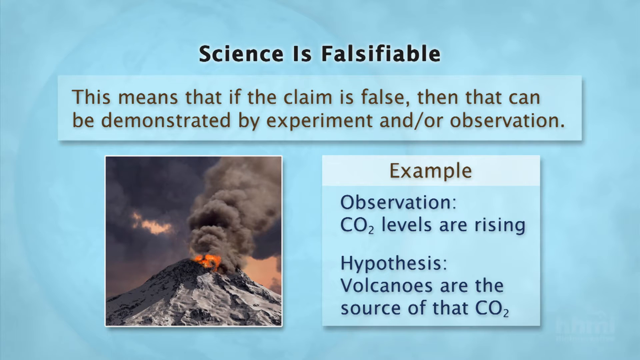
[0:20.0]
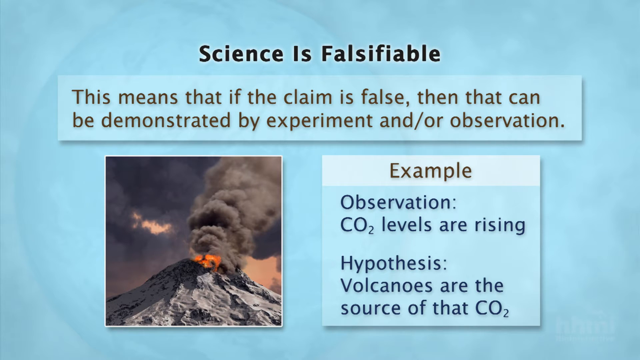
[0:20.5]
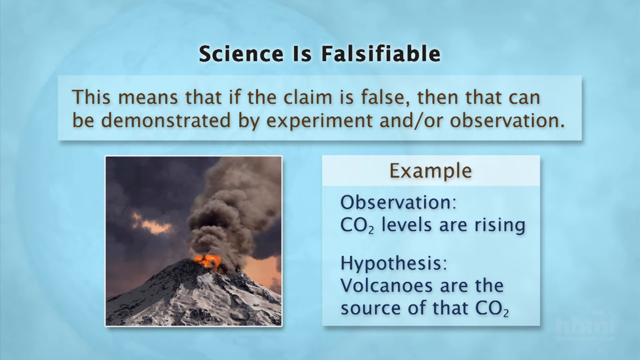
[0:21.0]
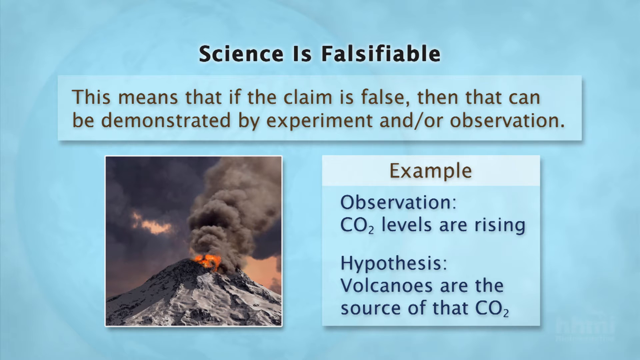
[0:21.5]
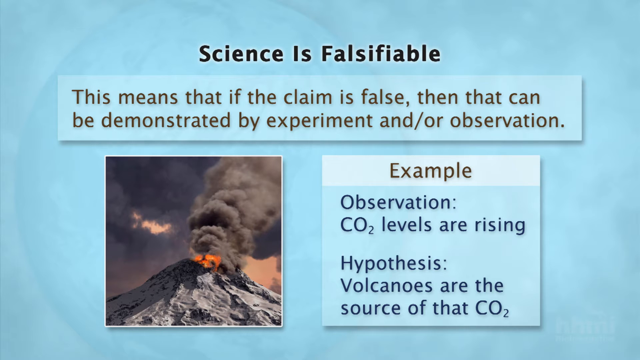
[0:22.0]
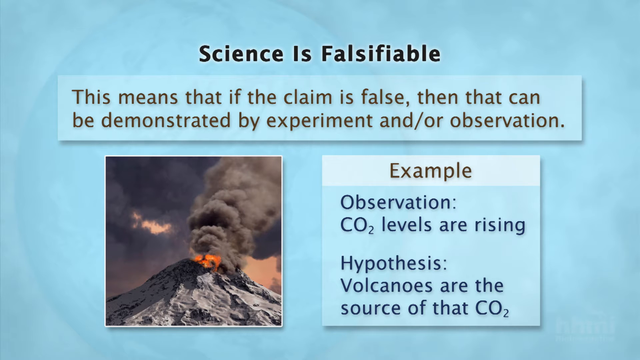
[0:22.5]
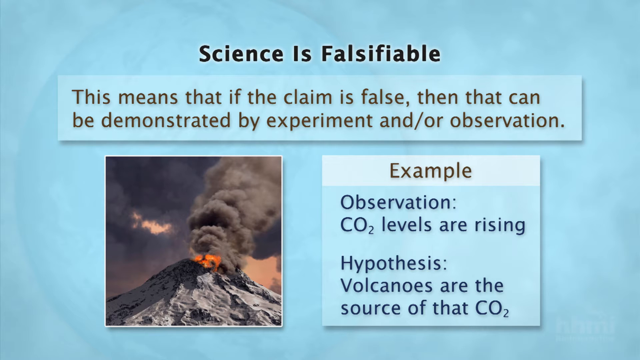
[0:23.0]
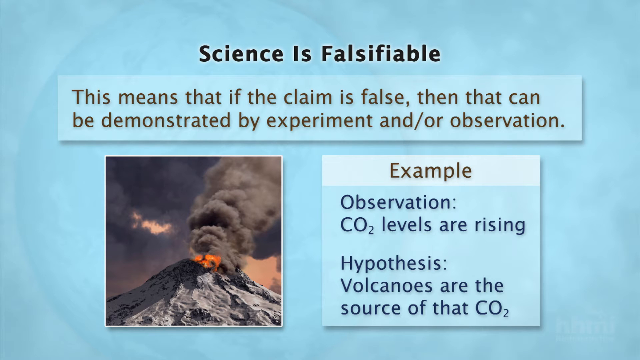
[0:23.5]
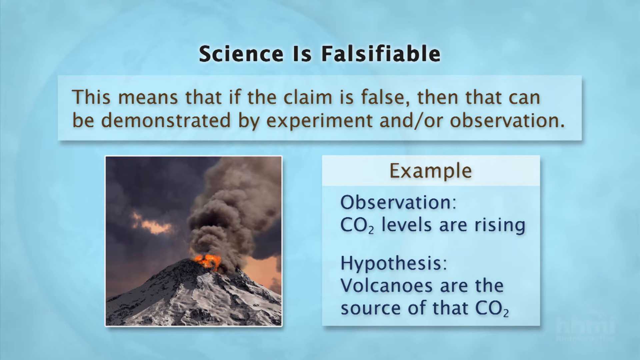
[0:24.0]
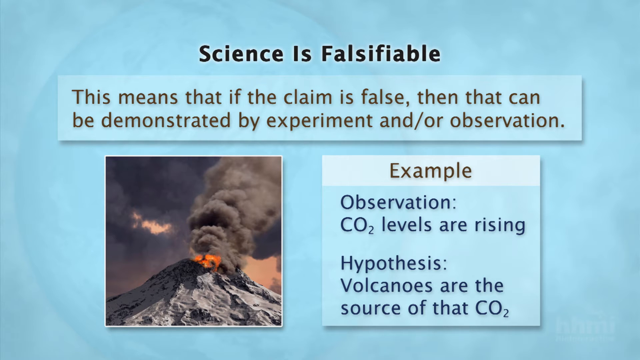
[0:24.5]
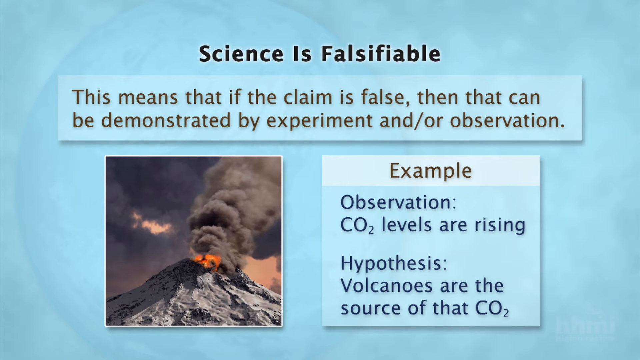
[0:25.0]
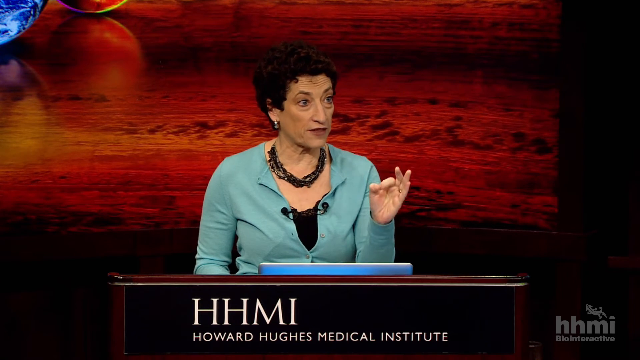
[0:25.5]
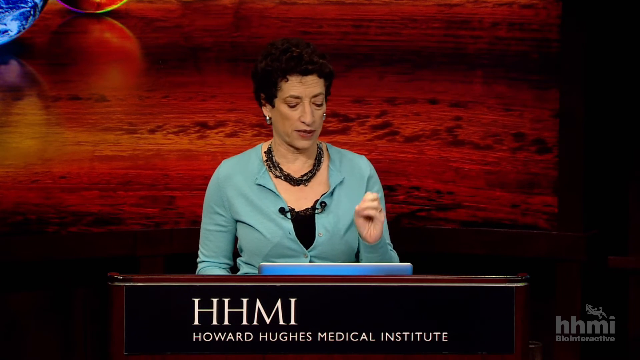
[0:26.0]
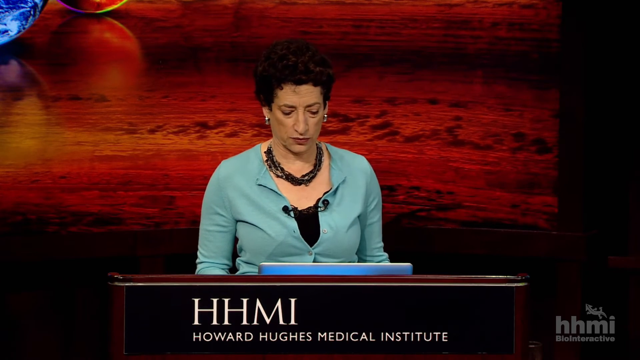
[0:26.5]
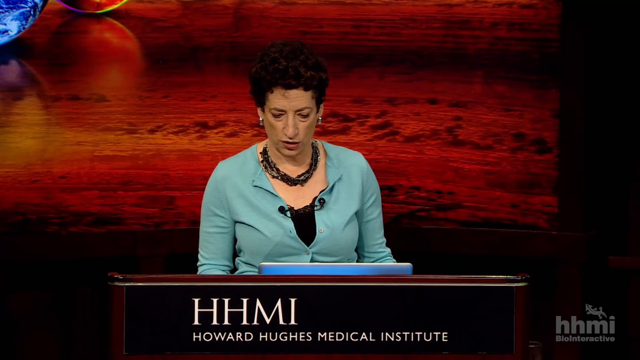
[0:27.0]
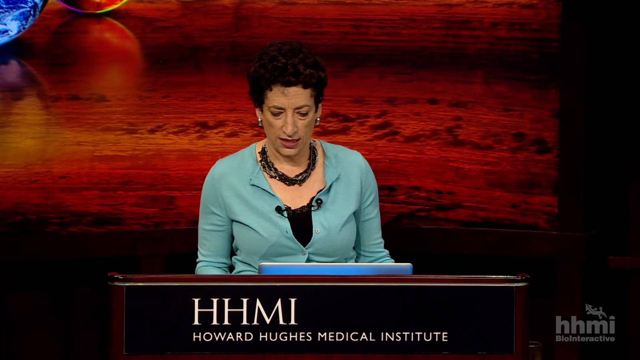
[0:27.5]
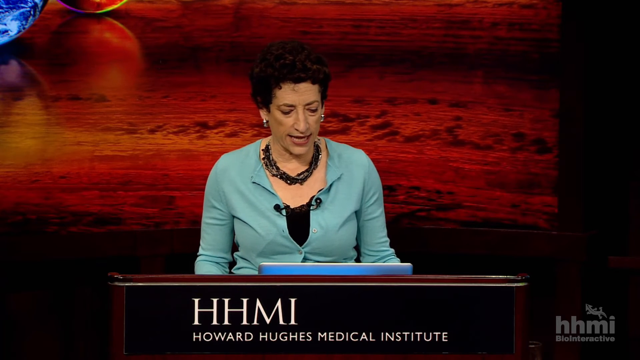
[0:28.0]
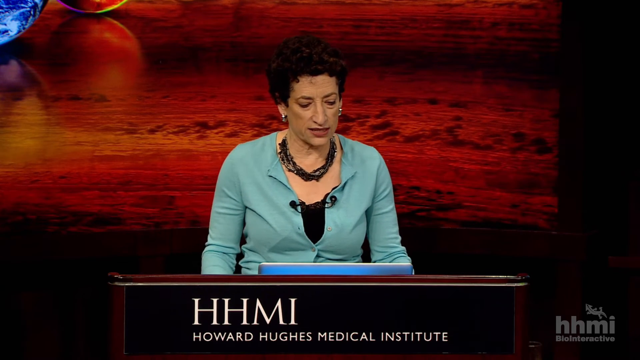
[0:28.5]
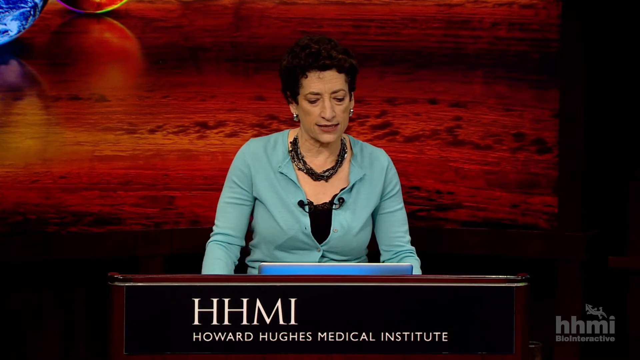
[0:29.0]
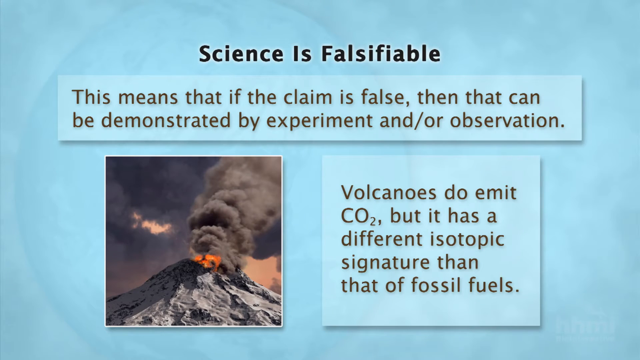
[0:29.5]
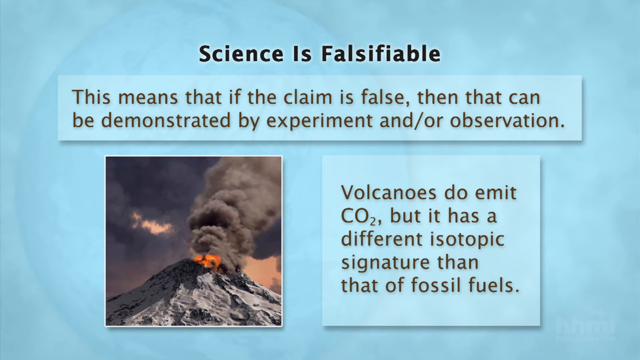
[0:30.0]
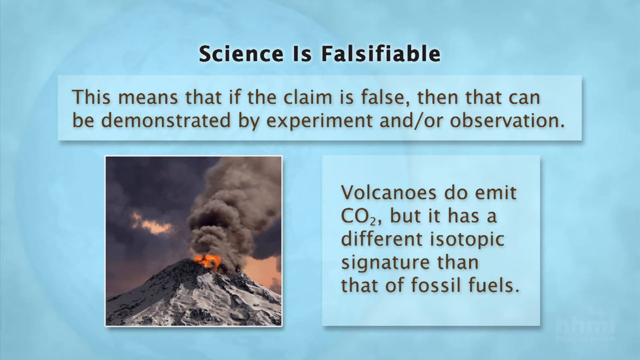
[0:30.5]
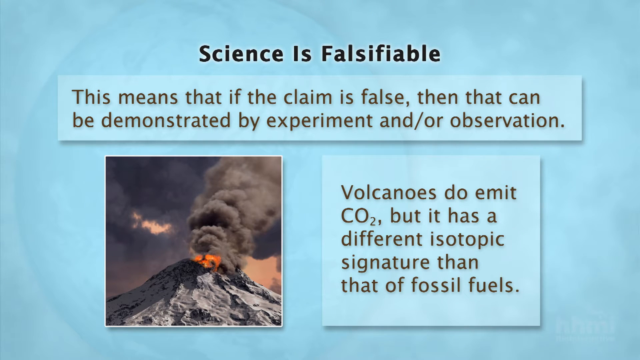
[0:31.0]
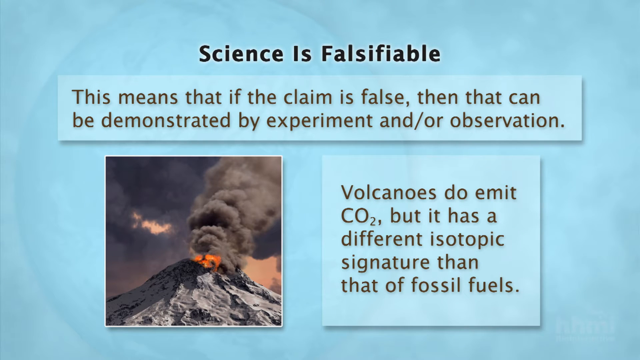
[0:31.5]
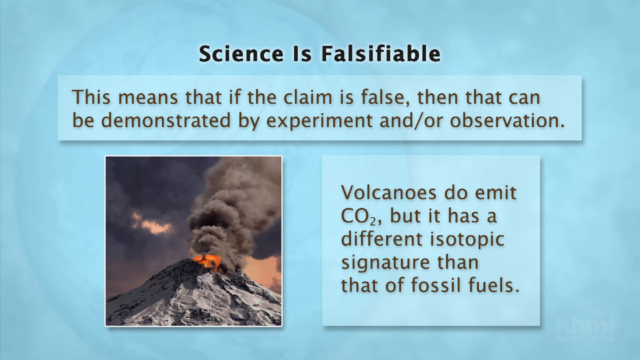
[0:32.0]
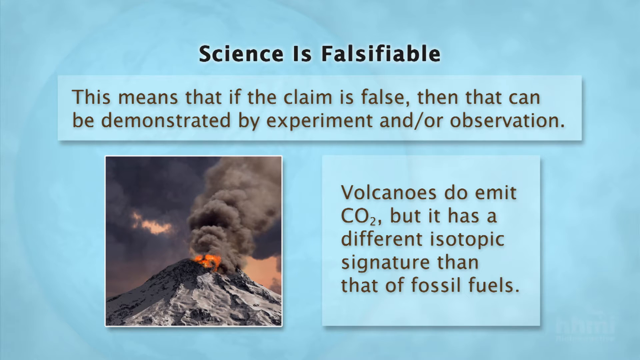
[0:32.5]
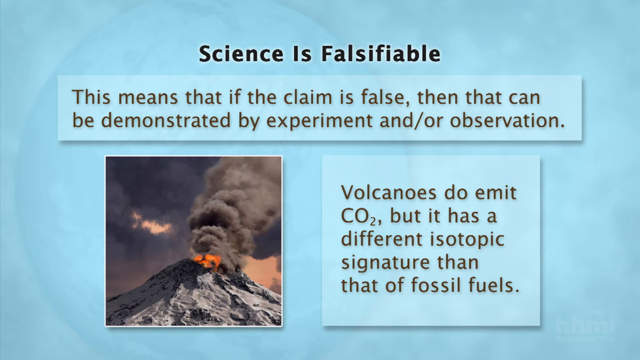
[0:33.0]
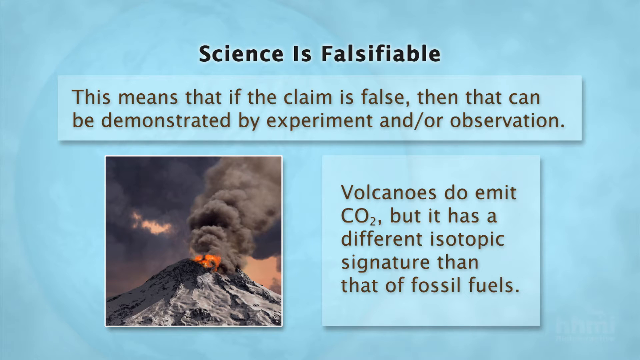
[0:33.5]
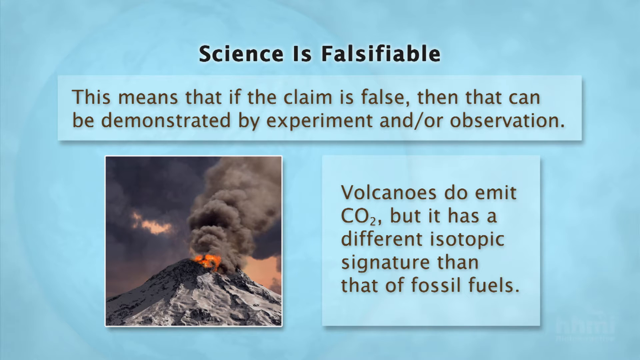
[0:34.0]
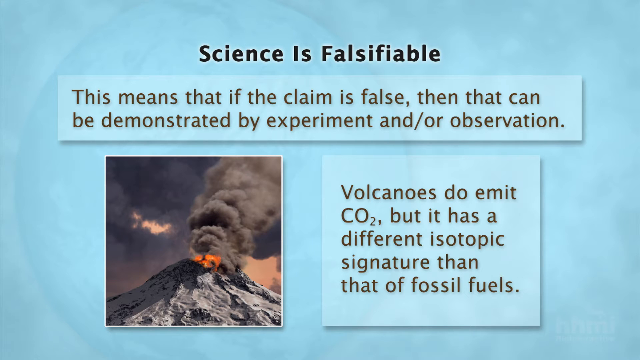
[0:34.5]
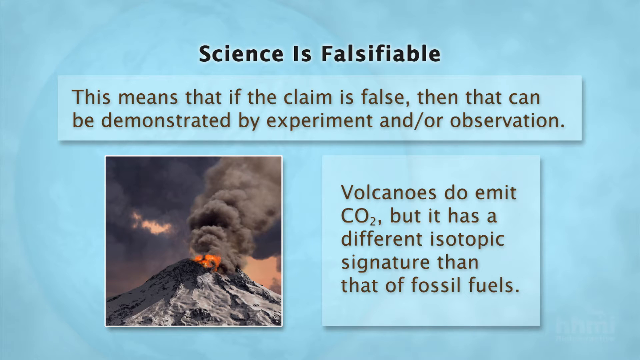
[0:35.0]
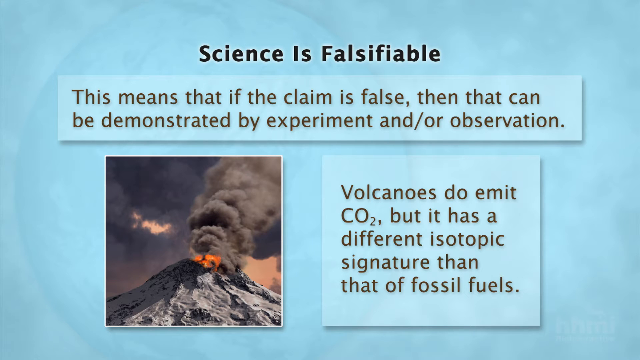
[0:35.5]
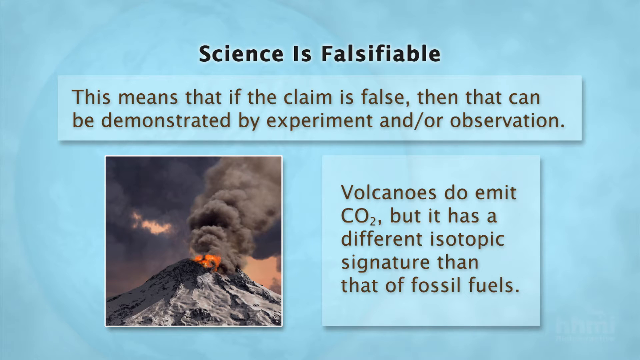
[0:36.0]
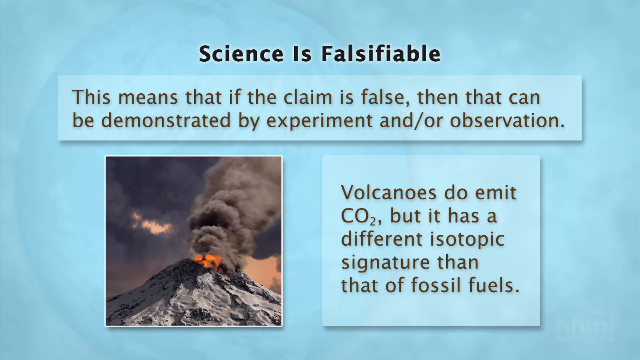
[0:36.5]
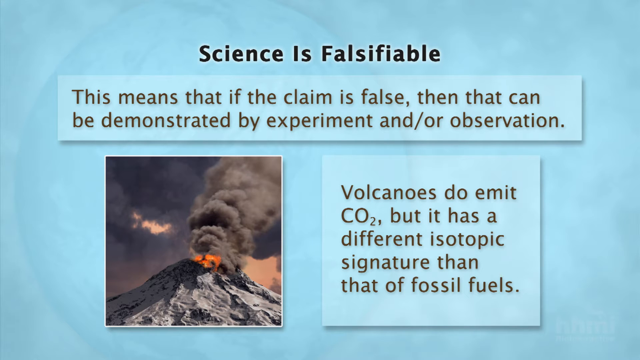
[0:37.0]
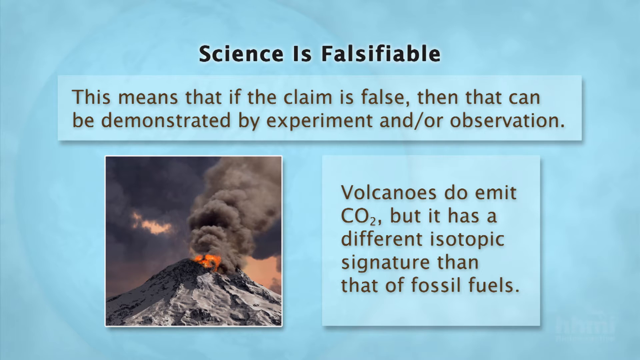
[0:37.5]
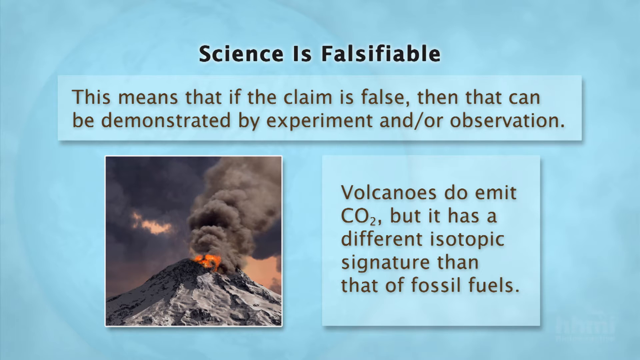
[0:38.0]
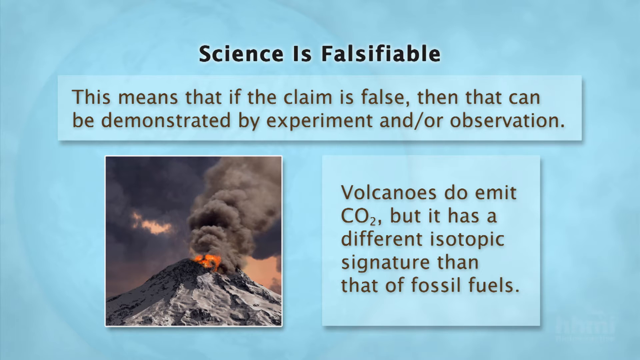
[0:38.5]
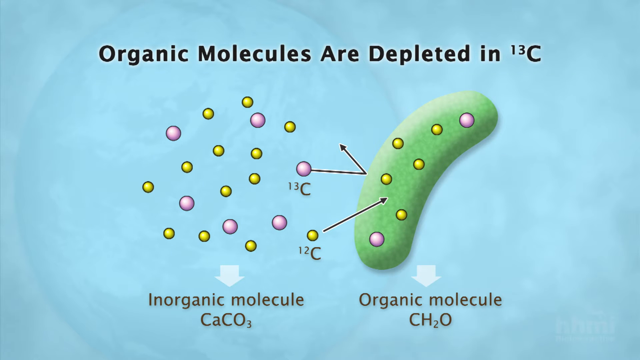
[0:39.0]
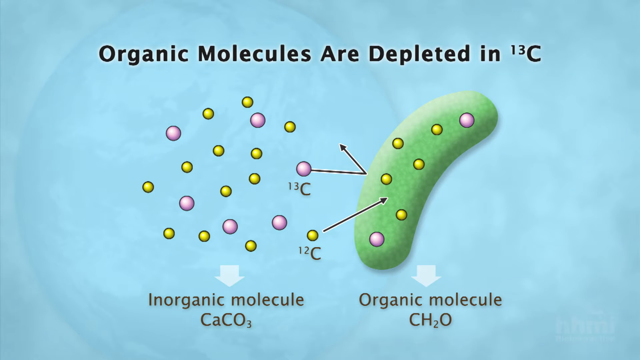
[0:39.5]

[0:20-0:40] The slide reading "science is falsifiable" appears again in dark text on the blue background. Below it says "this means that if the claim is false, then that can be demonstrated by experiment and or observation," and below that, "example, observation, CO2 levels are rising. Hypothesis, volcanoes are the source of that CO2," with an image of a volcano on the left. The woman from the Howard Hughes Medical Institute is shown speaking again, and then the video cuts back to the same "science is falsifiable" slide. Next comes a different image with what looks to be molecules, shown as pink and yellow dots, and a large, kind of green shape that almost looks like a pickle. At the top it says "organic molecules are depleted in 13C," and it also says "inorganic molecules, CaCO3" and "organic molecules, CH2O."